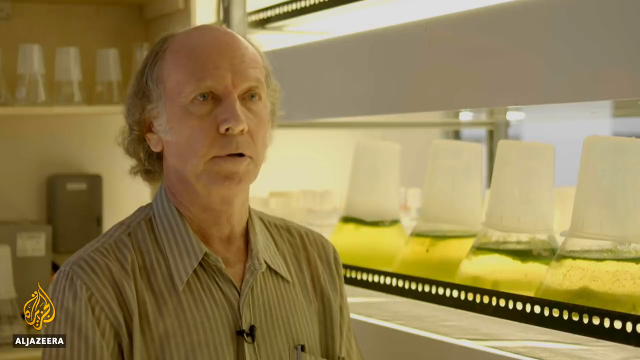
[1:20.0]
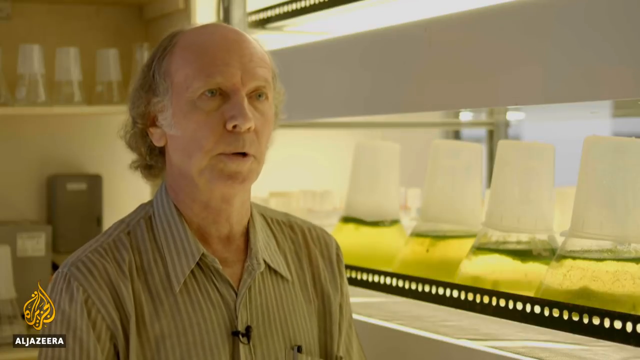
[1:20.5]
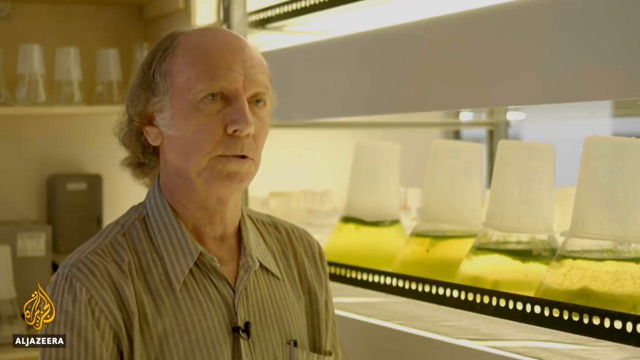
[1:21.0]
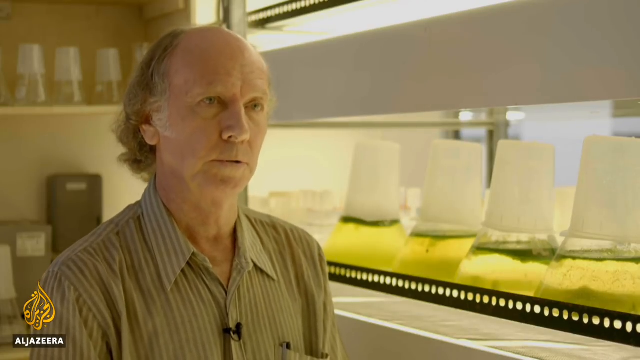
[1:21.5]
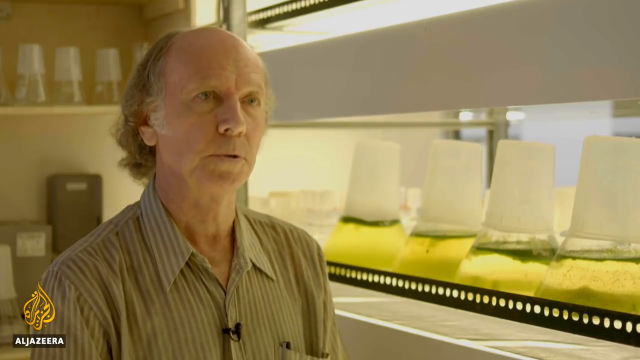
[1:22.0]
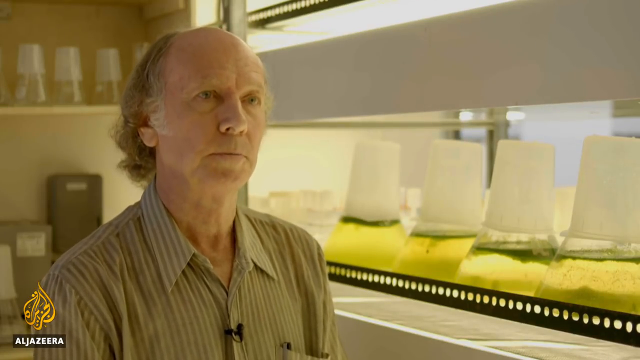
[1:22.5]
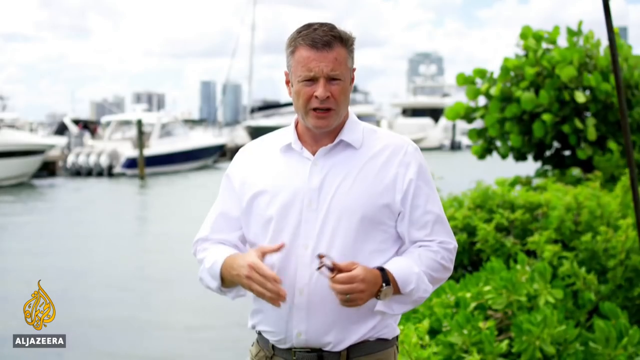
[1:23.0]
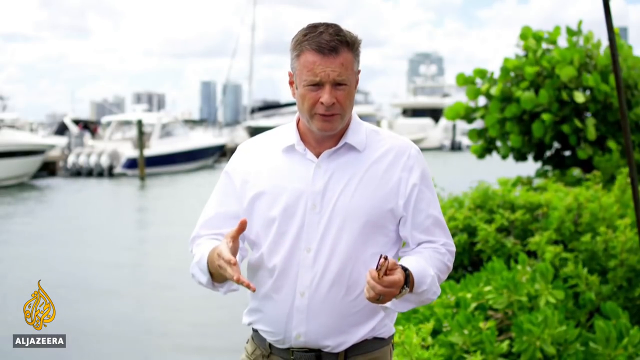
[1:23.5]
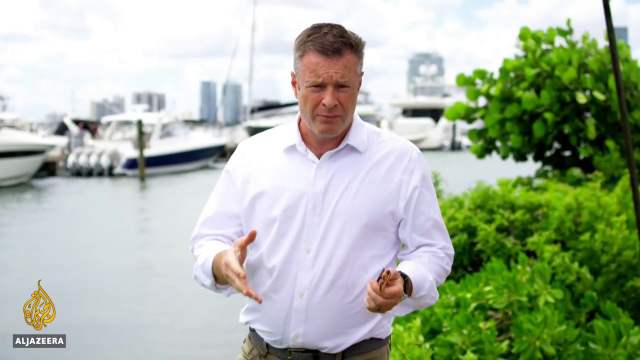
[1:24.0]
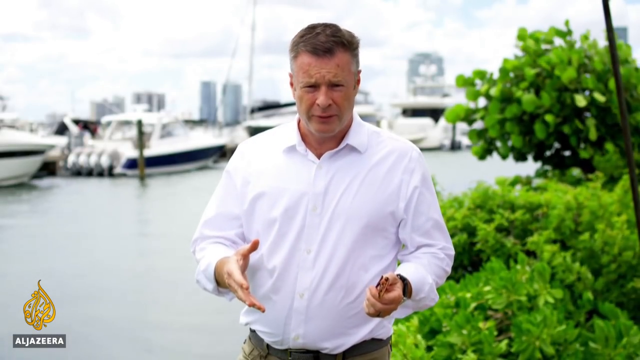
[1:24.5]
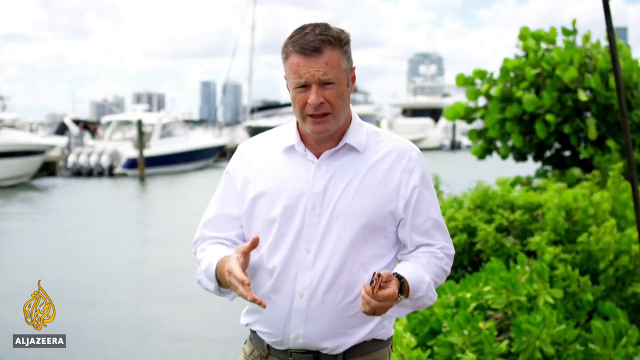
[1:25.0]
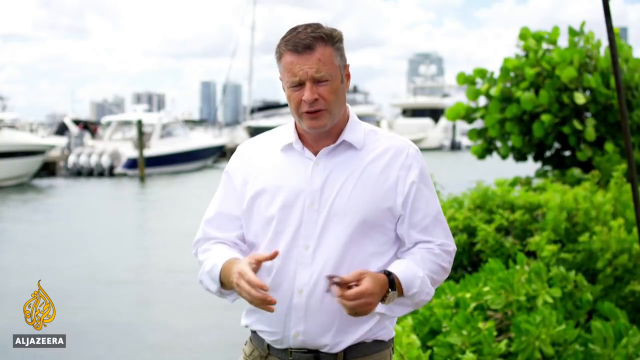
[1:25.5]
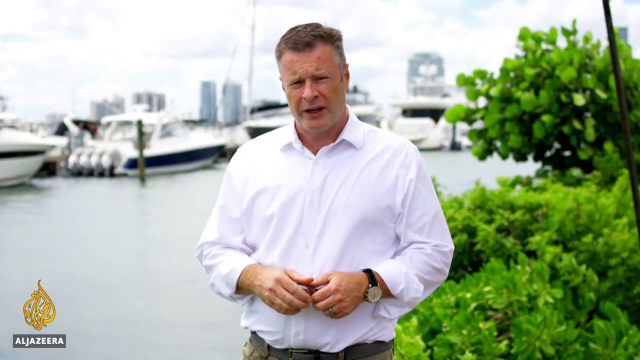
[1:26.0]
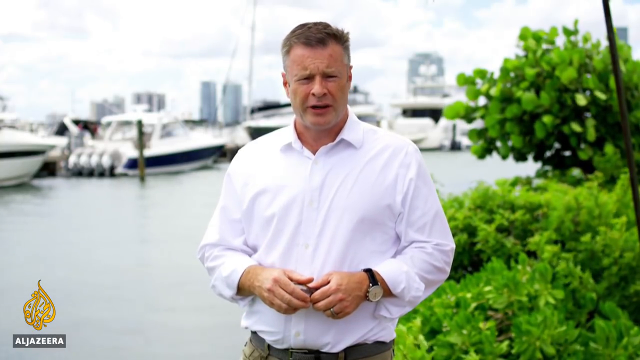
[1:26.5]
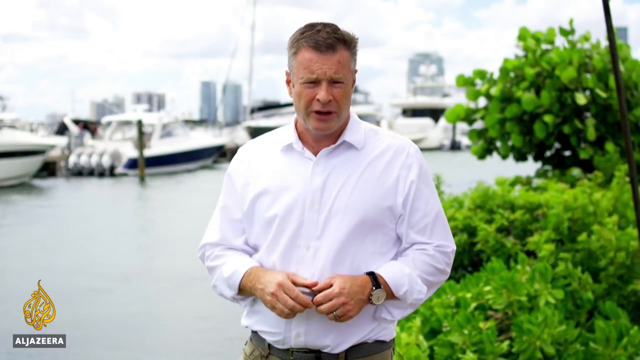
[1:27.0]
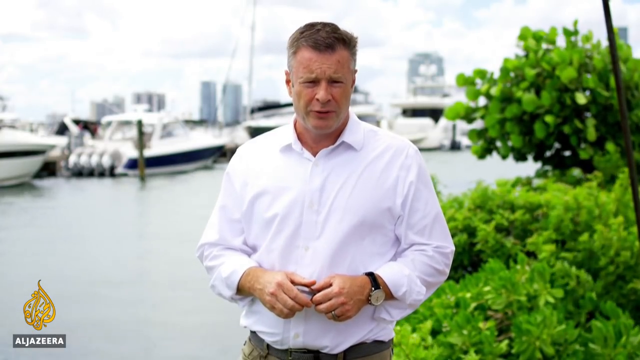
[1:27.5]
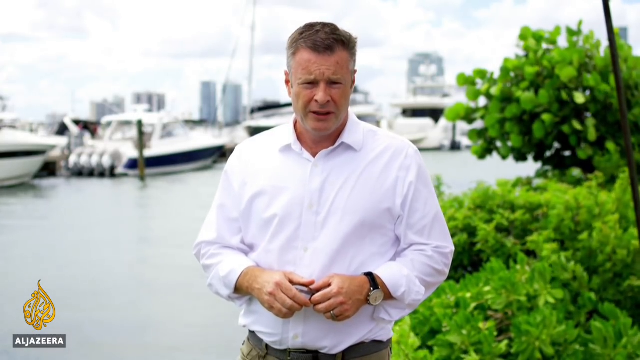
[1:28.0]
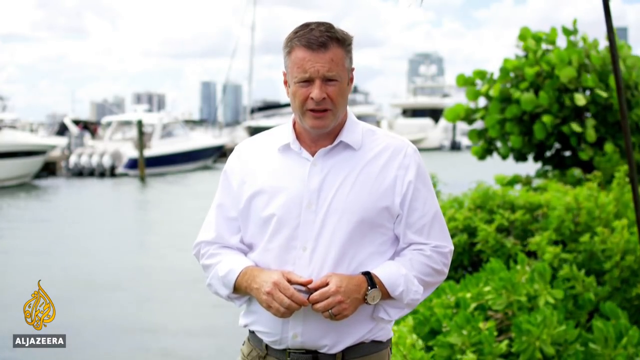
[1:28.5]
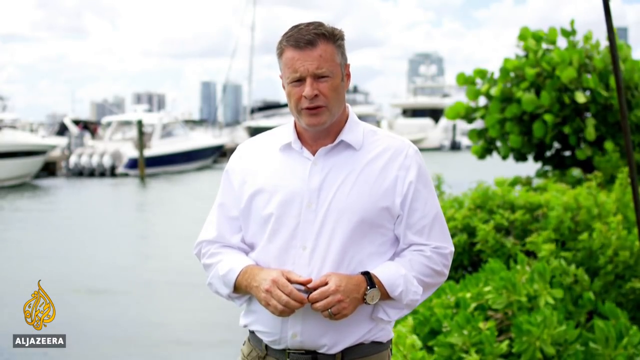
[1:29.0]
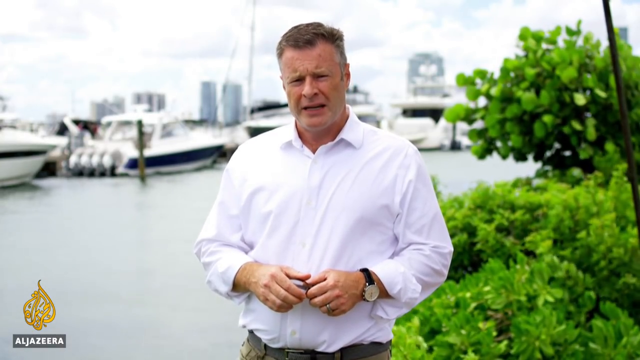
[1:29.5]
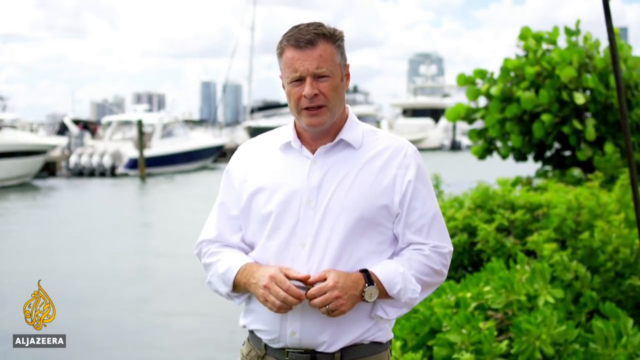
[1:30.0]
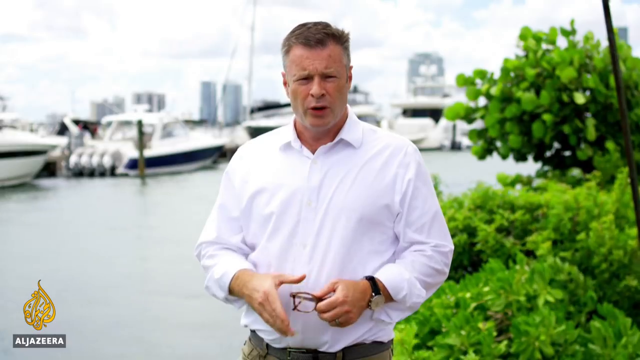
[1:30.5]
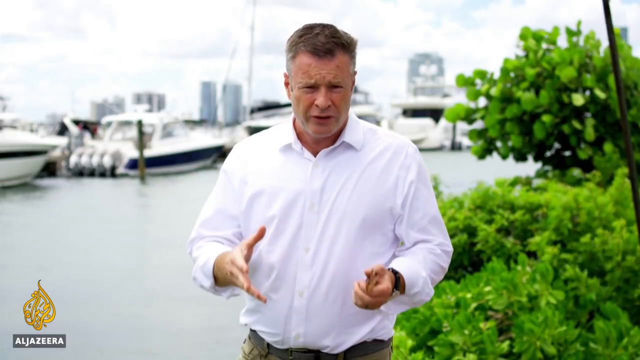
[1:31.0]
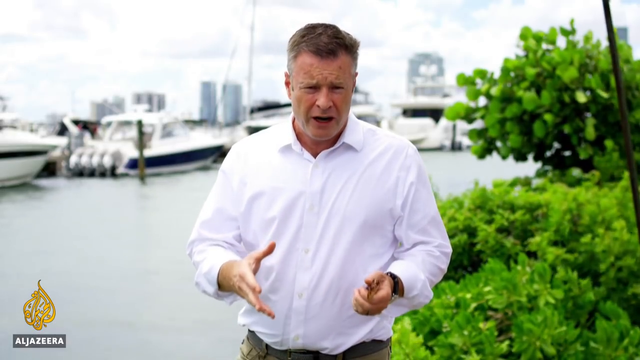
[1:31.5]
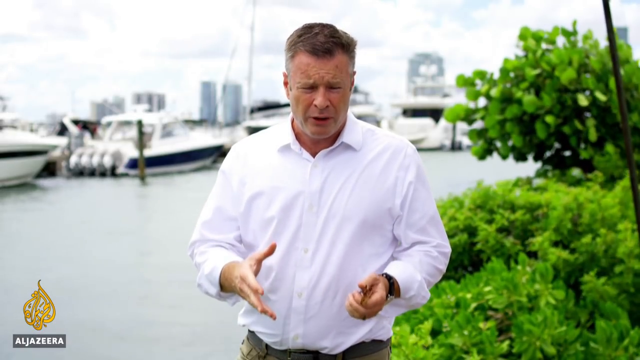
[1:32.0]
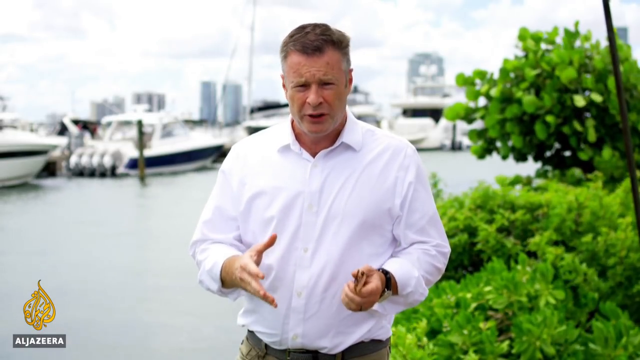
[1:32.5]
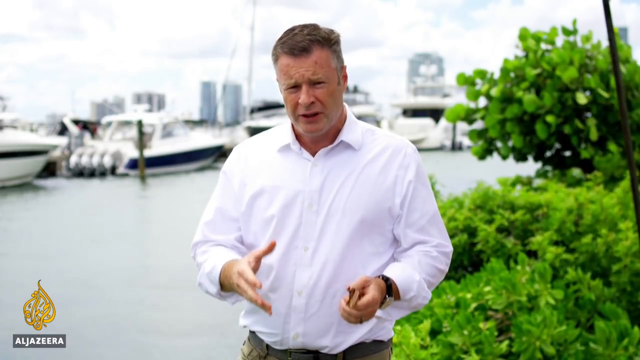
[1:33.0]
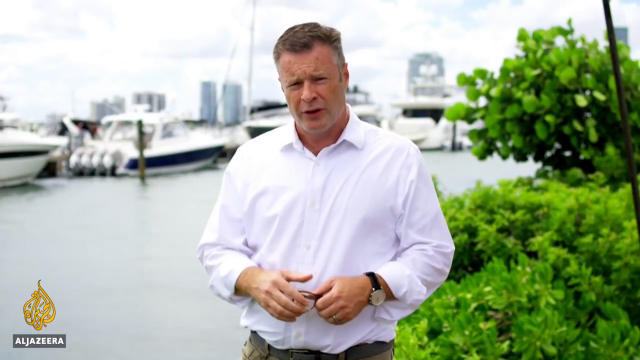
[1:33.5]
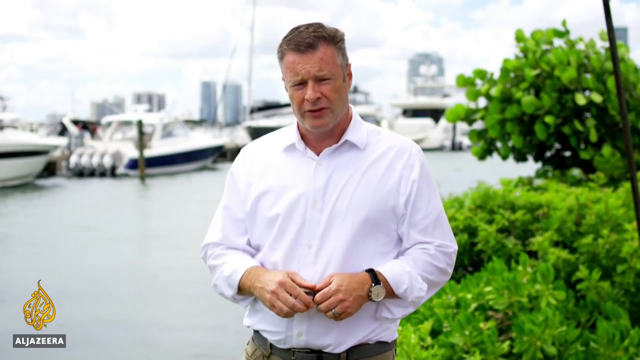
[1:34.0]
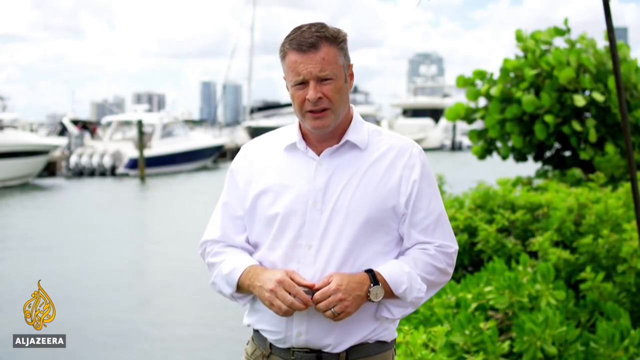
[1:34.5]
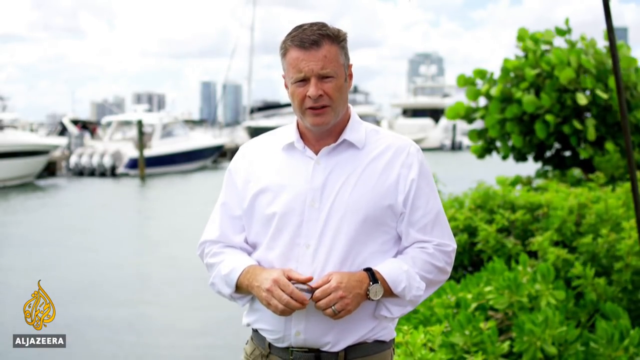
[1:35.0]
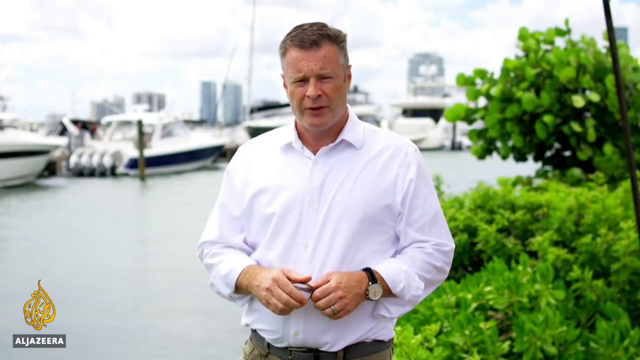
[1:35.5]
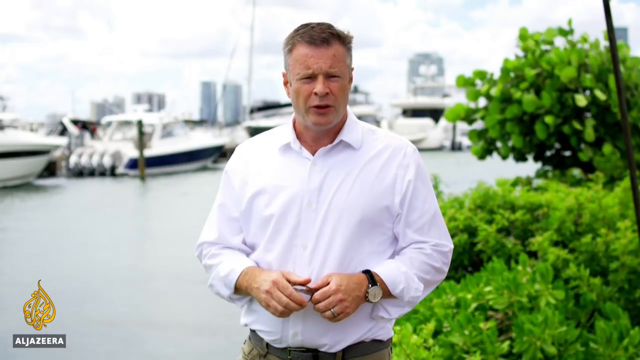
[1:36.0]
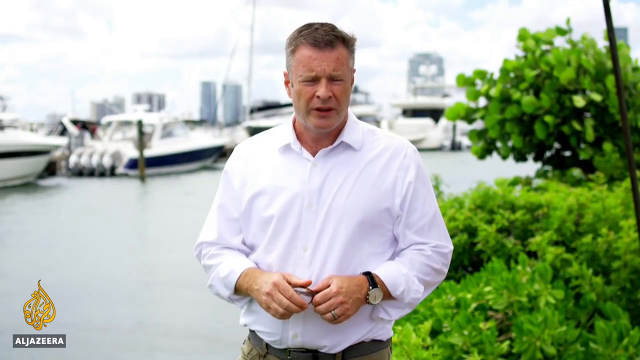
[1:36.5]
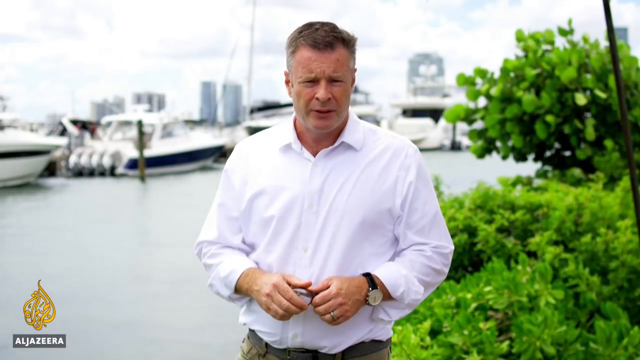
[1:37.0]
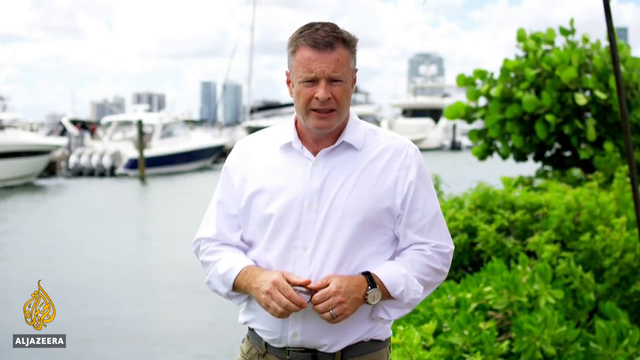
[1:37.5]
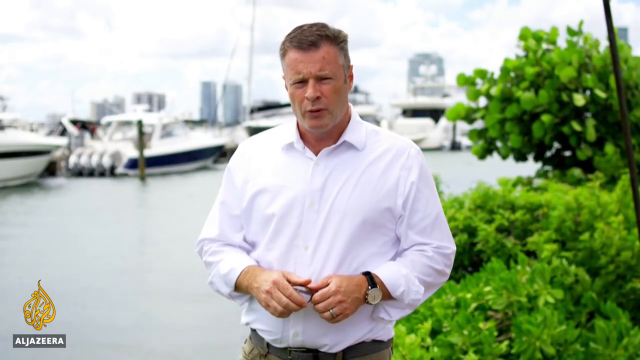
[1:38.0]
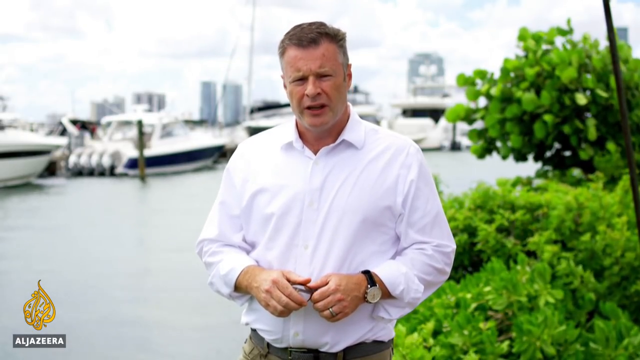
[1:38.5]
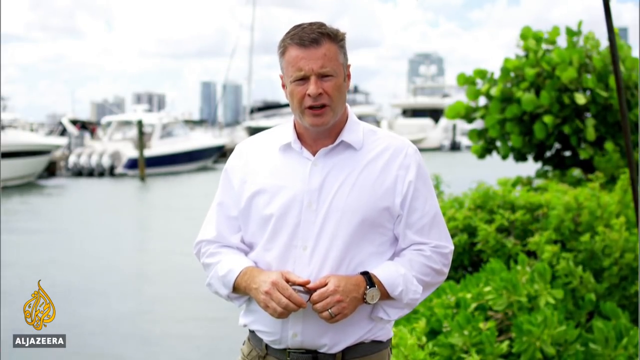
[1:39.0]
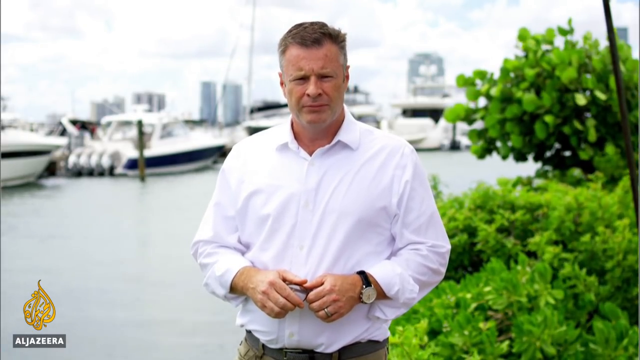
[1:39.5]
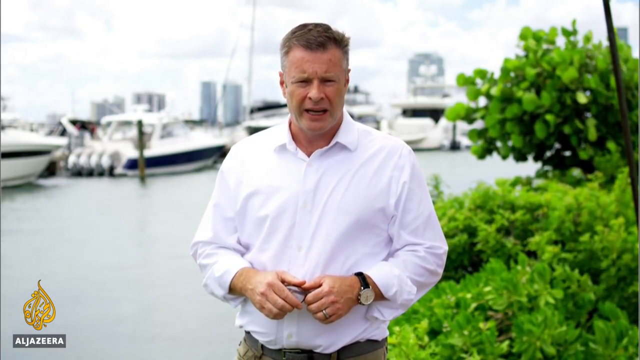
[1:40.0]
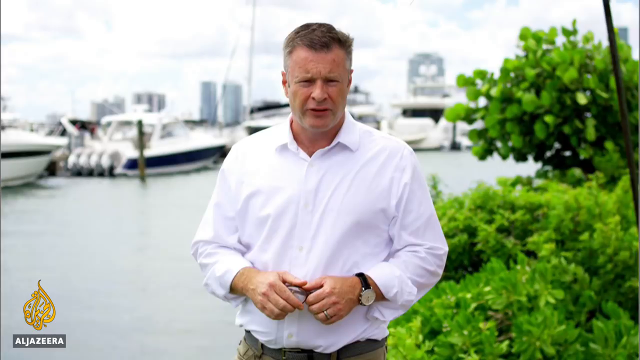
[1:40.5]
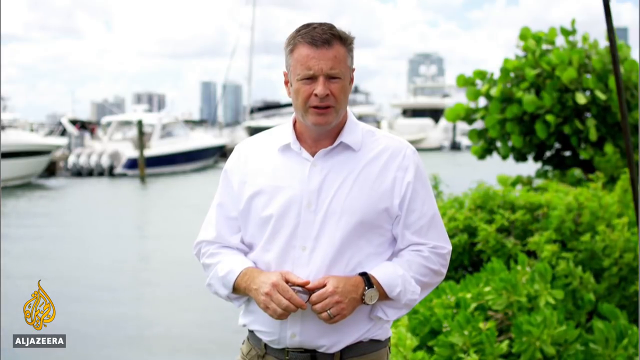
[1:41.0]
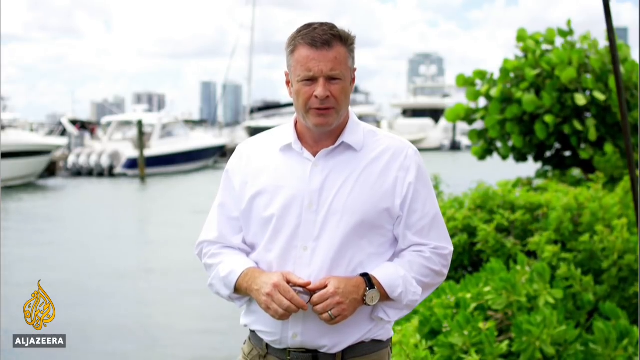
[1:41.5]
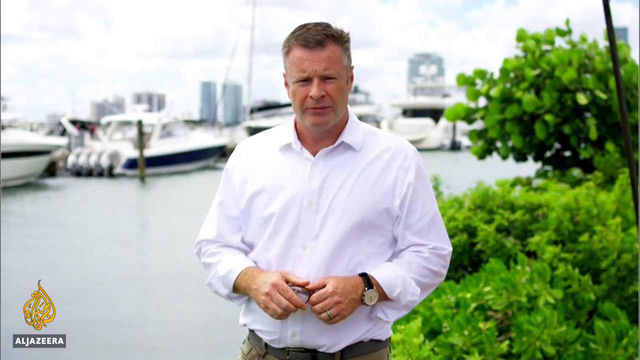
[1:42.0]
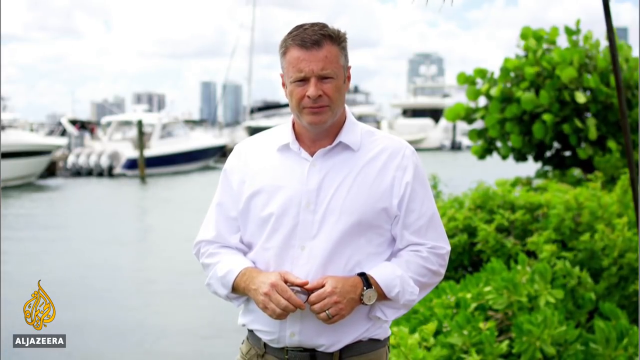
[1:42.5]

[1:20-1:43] The bald man talks in his lab setting. The video cuts to another man looking directly at the camera, wearing a big, almost oversized white dress shirt. Marine bushes are on the right behind him, and in the background is a marina with many white boats tied up. He moves his hands up and down, holding his glasses in the hand on the viewer's right, which also wears a watch. He puts his hands together, holding the glasses with both, then takes them apart and gestures with the glasses still in his right hand, then puts his hands back together, talking directly to the camera and holding the glasses until the end. He is possibly the news anchor for this Al Jazeera News report.